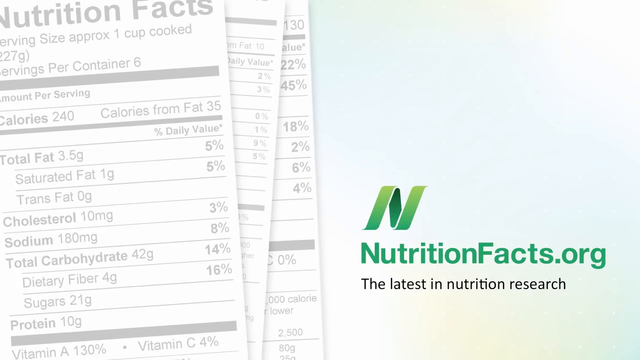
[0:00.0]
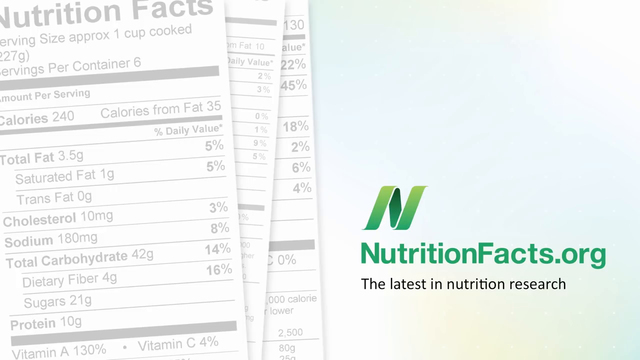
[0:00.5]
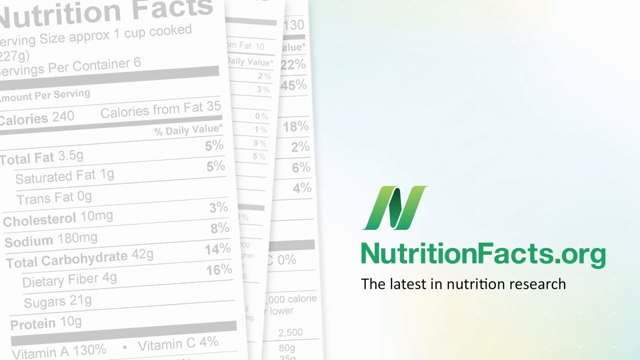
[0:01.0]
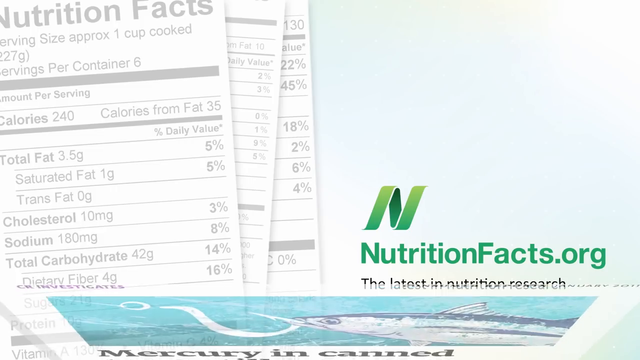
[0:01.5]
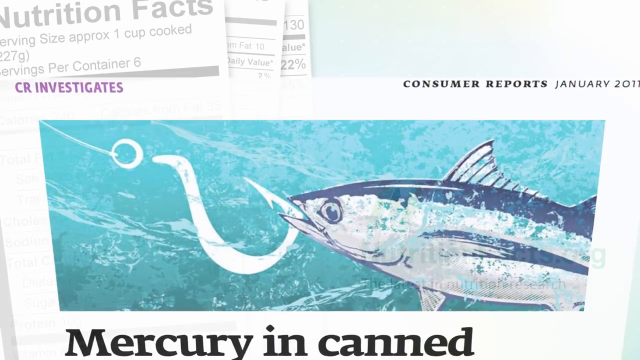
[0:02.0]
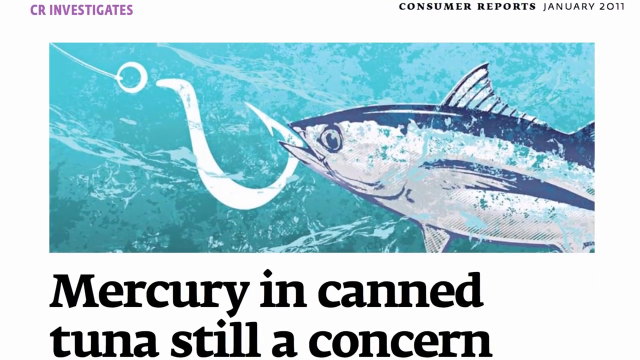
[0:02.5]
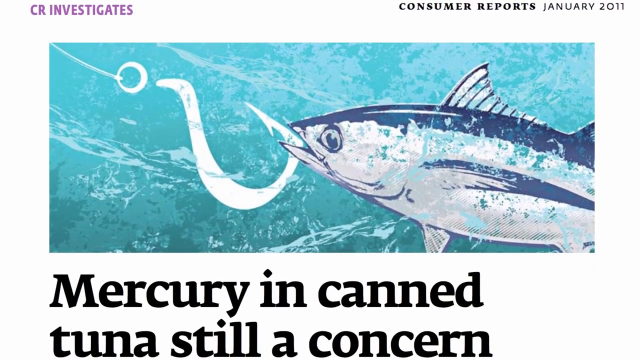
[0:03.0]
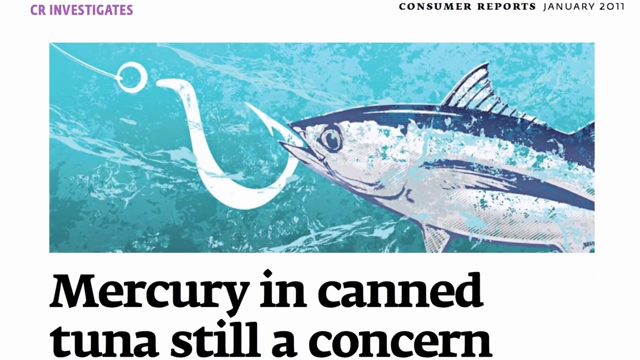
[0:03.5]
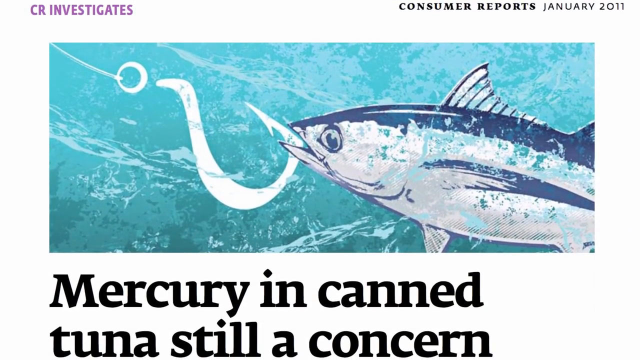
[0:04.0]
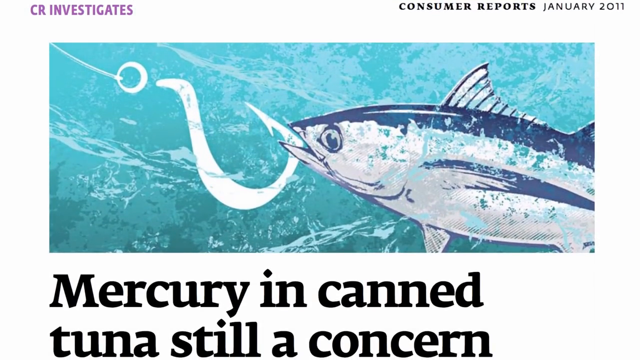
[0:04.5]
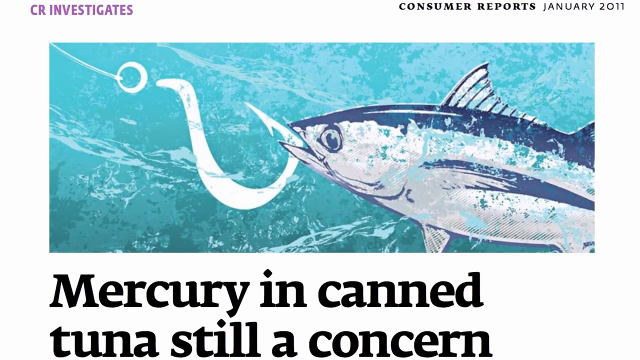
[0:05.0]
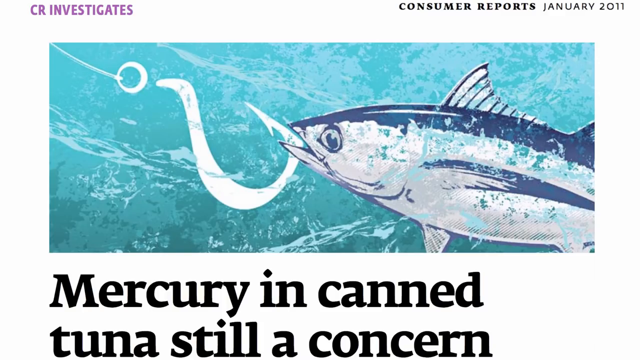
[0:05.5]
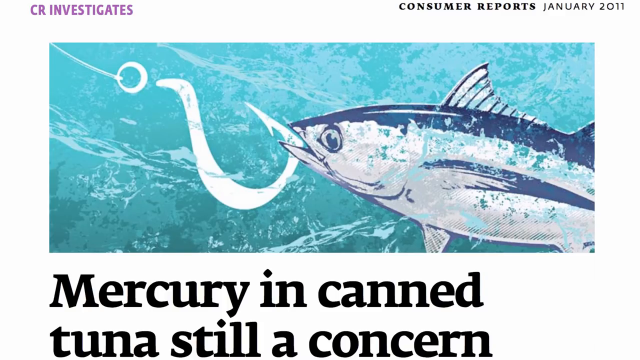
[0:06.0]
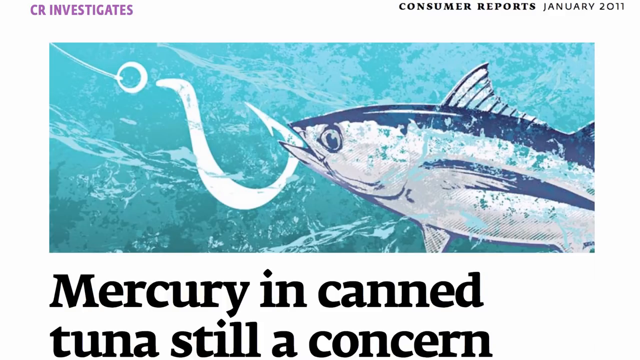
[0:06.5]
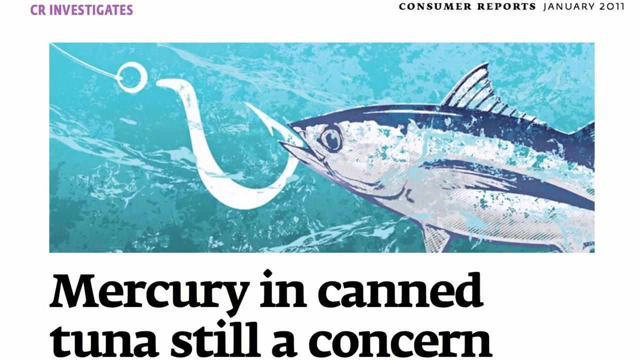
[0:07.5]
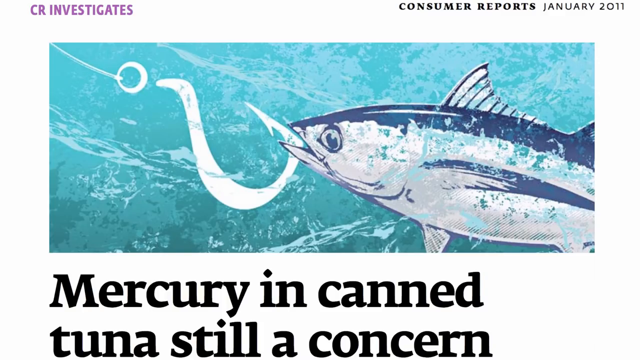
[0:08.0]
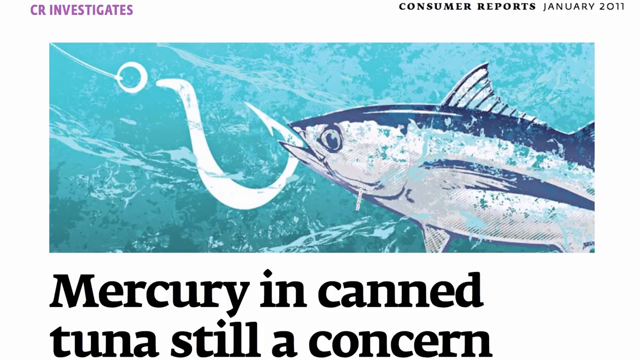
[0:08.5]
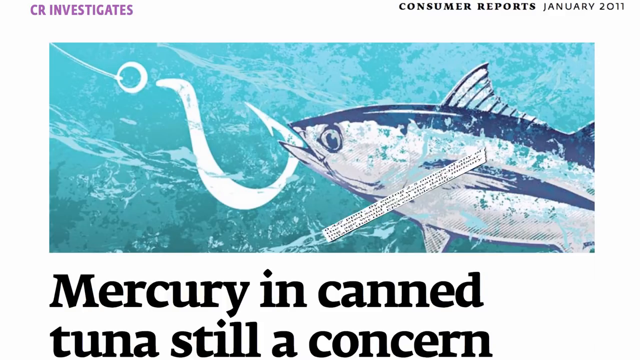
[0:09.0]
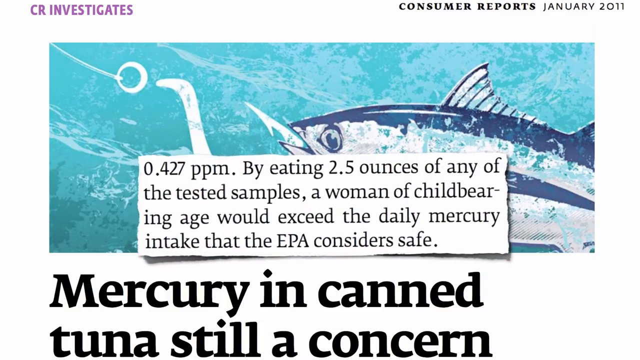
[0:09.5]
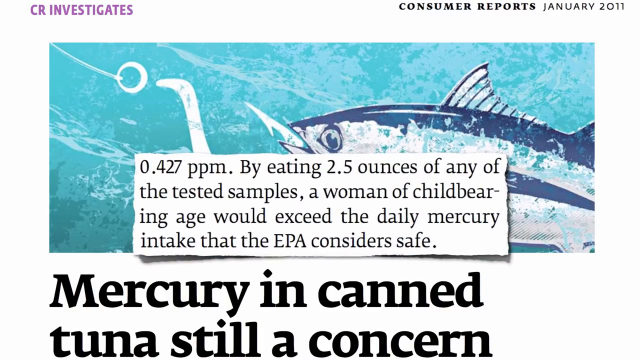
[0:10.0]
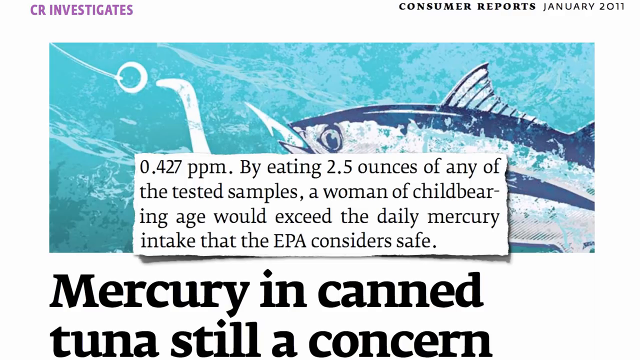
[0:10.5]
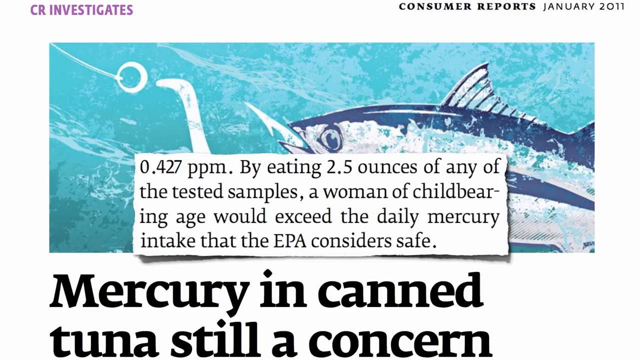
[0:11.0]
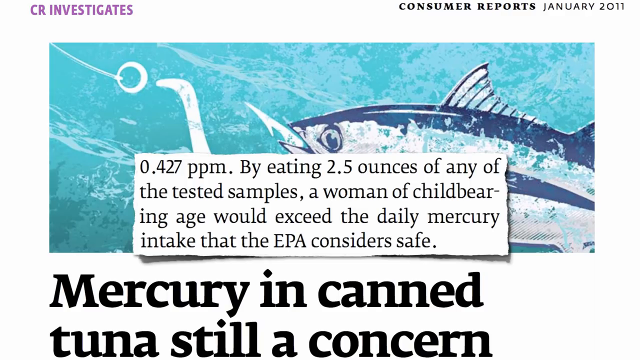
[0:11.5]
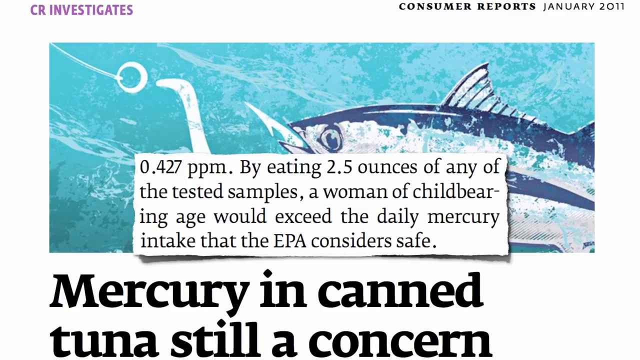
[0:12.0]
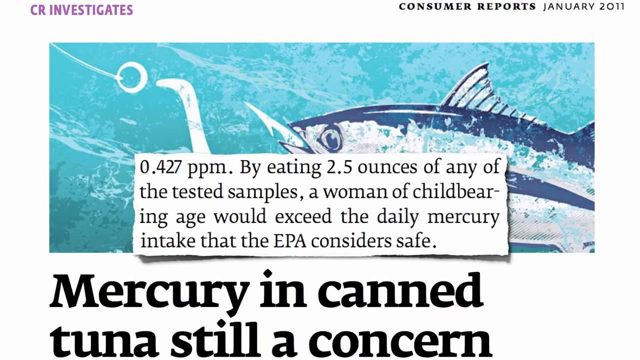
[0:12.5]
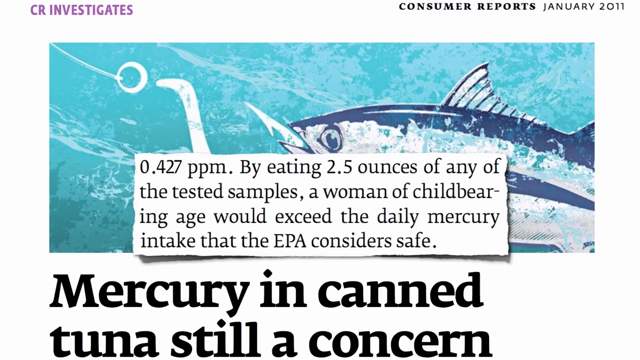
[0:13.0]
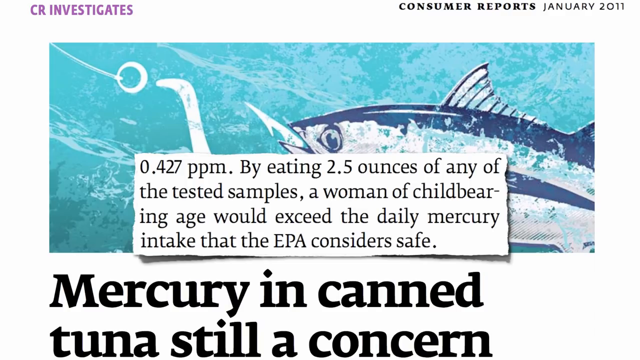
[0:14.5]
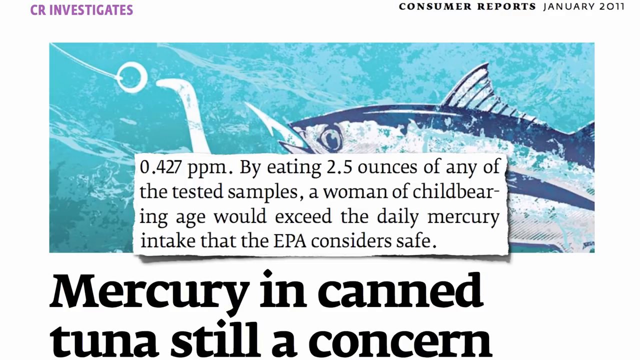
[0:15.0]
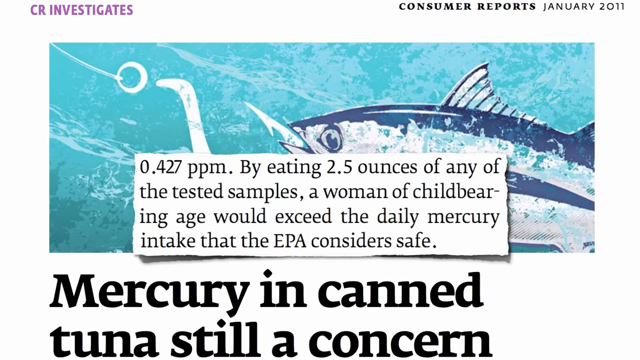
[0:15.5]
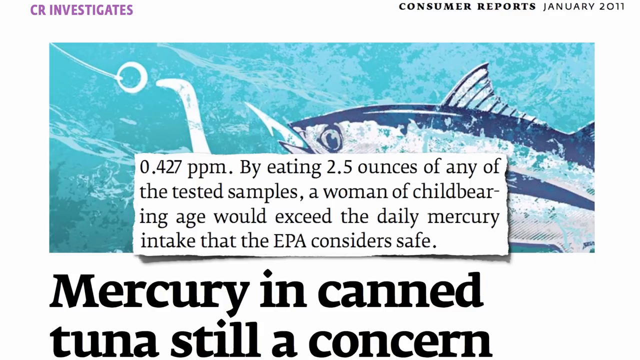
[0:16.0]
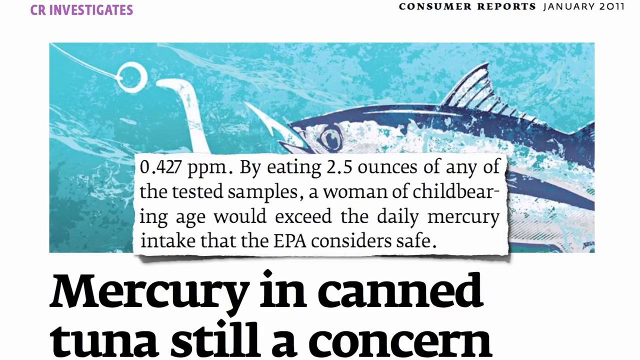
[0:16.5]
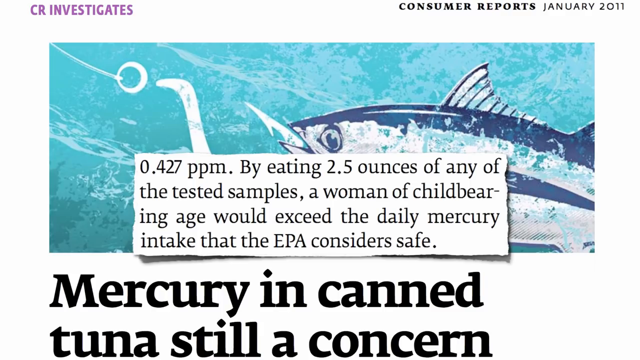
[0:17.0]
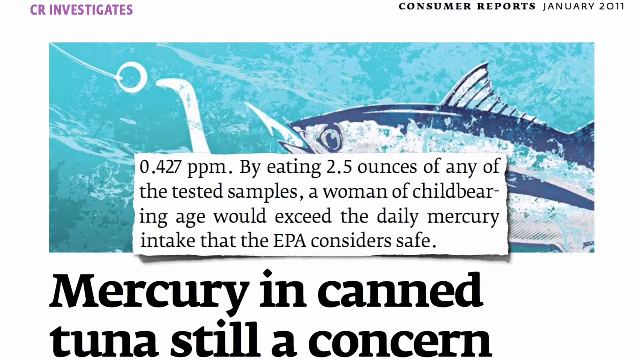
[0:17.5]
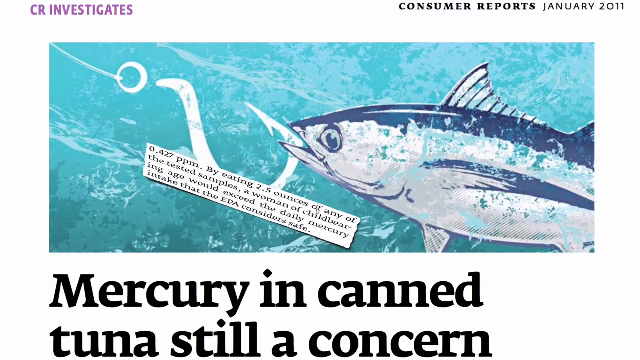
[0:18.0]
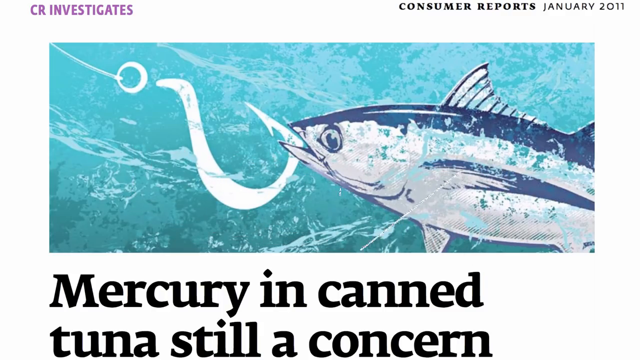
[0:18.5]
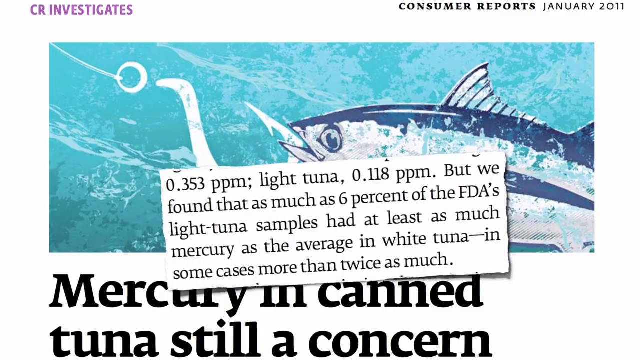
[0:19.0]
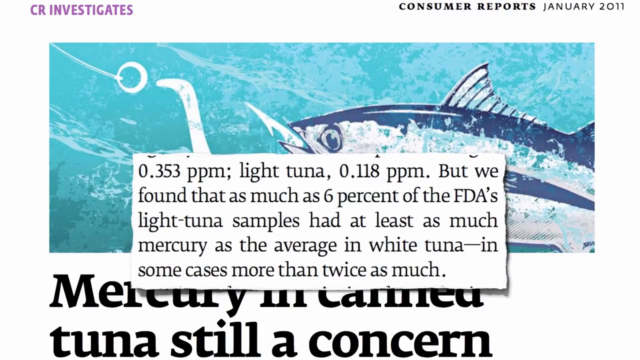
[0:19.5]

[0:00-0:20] Three documents appear on the left side of the screen, all resembling the nutrition facts labels found on food products, and they are barely legible. In the bottom right corner the screen reads "nutritionfacts.org's the latest in nutrition research." The screen changes to show, at the top, a picture of a fish with a hook in its mouth, surrounded by ocean water. Underneath the picture, text reads "mercury in canned tuna is still a concern." A text box then enters at the center of the screen reading "0.427 ppm. By eating 2.5 ounces of any of the tested samples, a woman of childbearing age would exceed the daily mercury intake that the EPA considers safe." Additional text then appears: "0.353 ppm light tuna, 0.118 ppm. But we found that as much as 6% of the FDA's light tuna samples had at least as much mercury as the average in white tuna, in some cases more than twice as much."